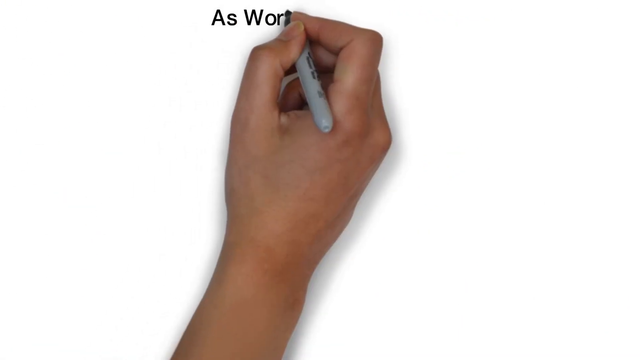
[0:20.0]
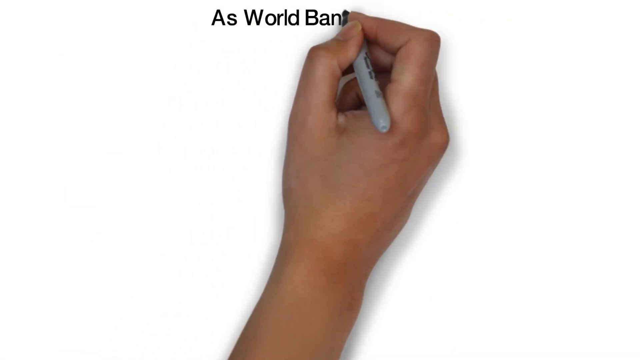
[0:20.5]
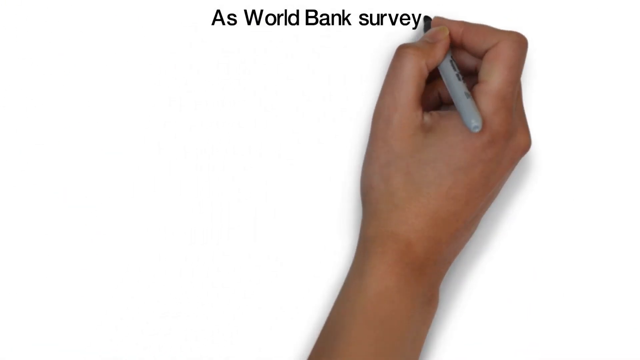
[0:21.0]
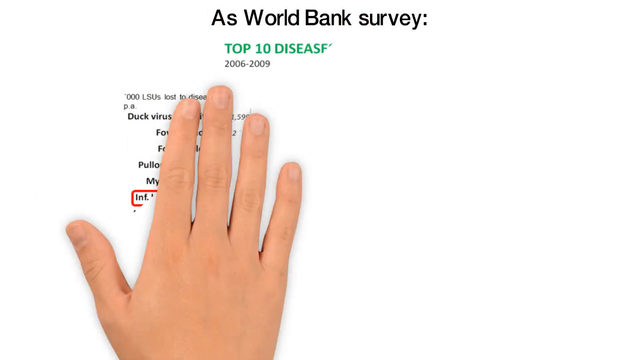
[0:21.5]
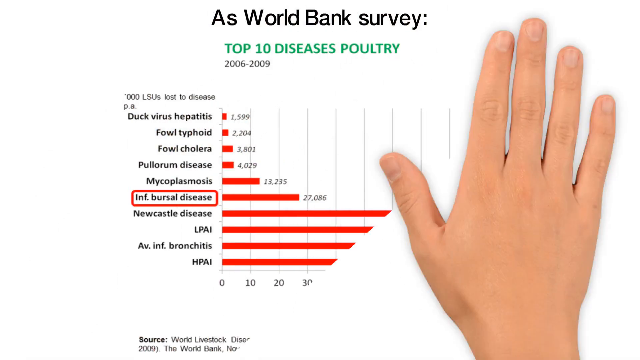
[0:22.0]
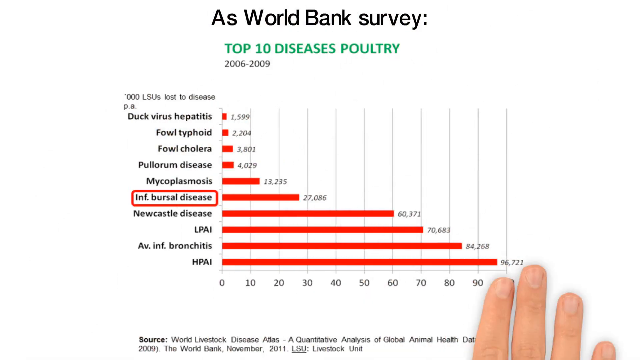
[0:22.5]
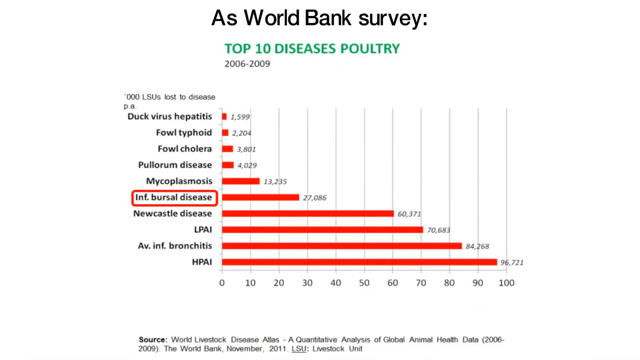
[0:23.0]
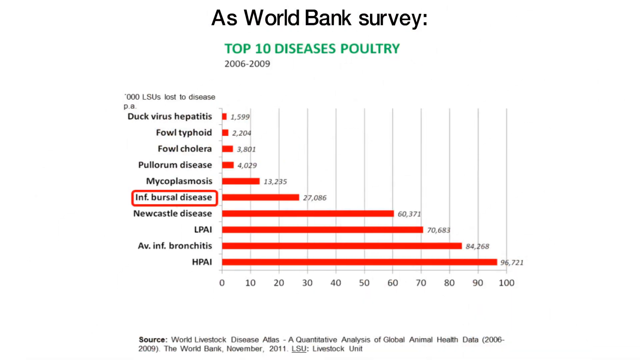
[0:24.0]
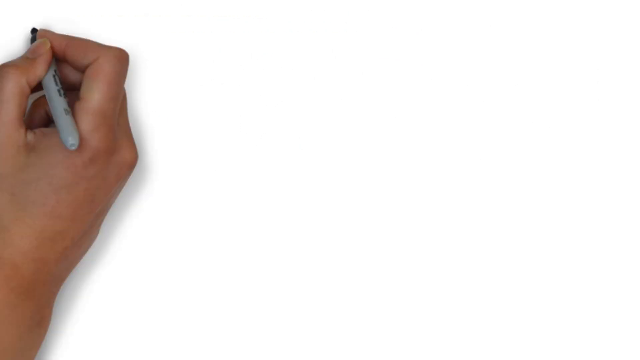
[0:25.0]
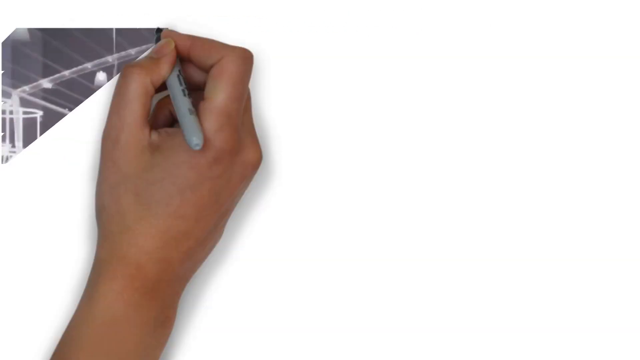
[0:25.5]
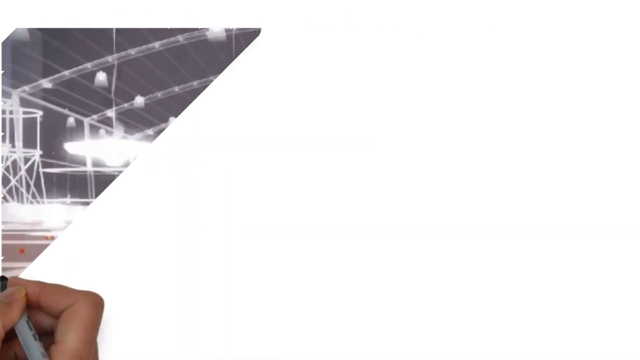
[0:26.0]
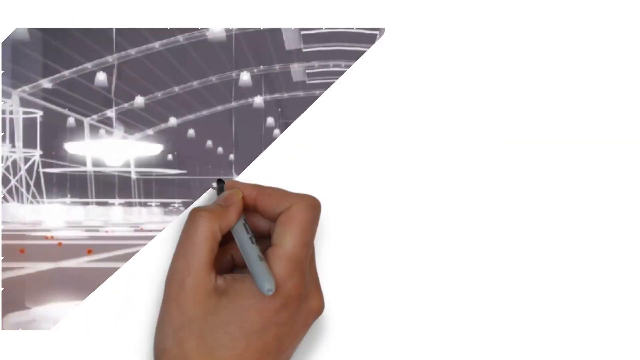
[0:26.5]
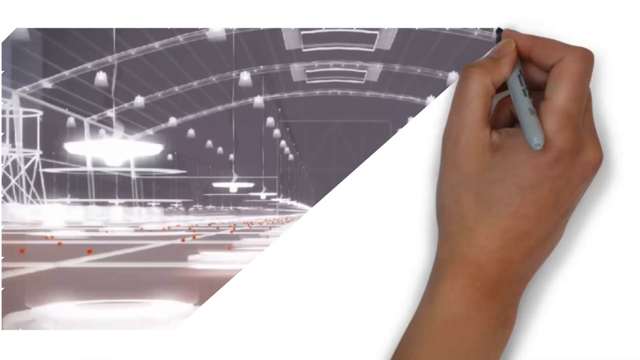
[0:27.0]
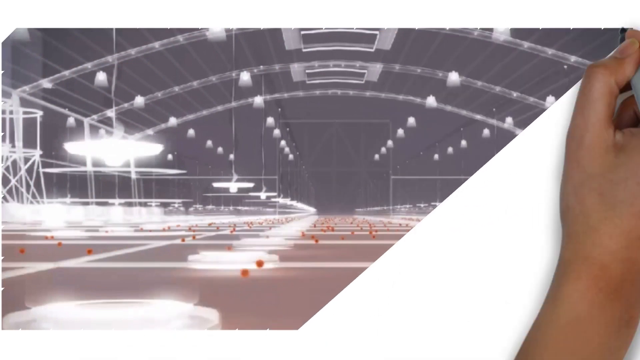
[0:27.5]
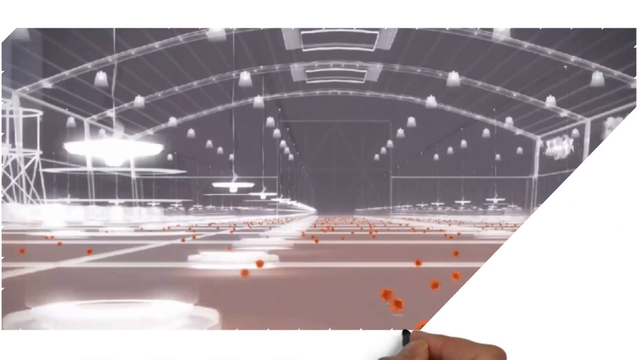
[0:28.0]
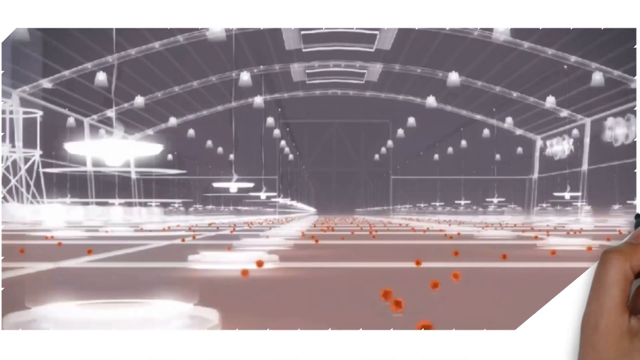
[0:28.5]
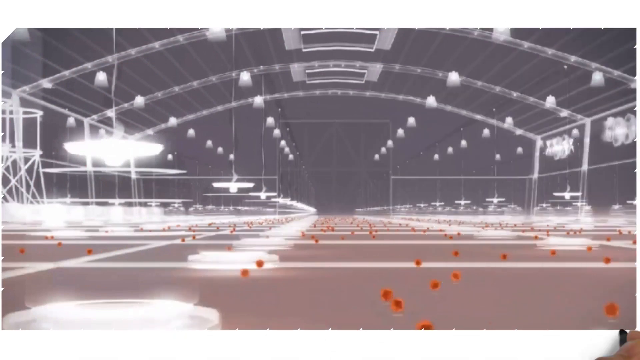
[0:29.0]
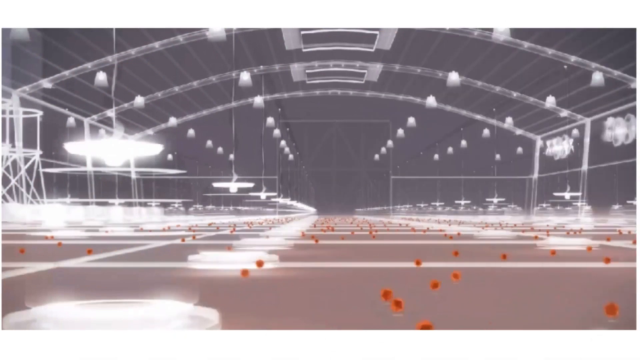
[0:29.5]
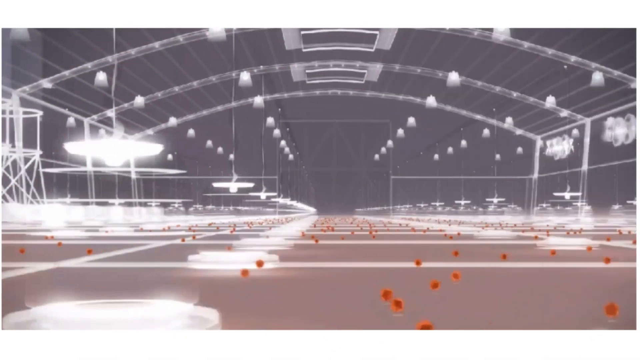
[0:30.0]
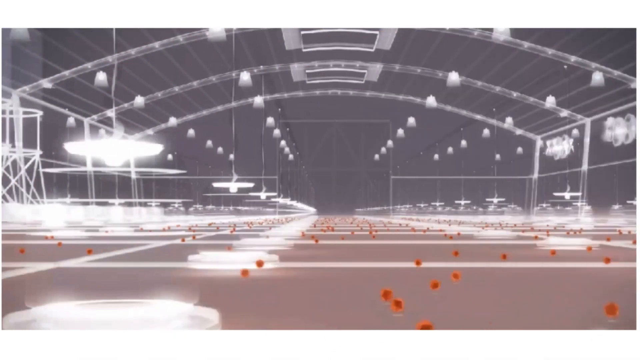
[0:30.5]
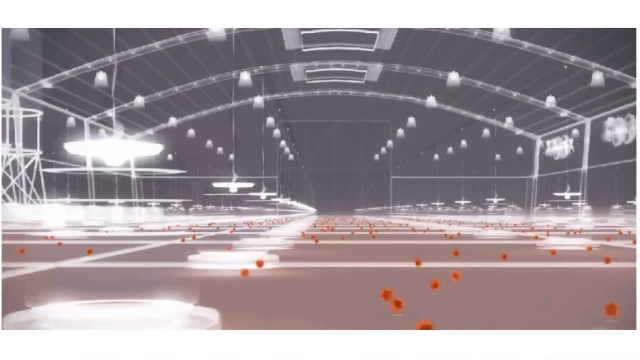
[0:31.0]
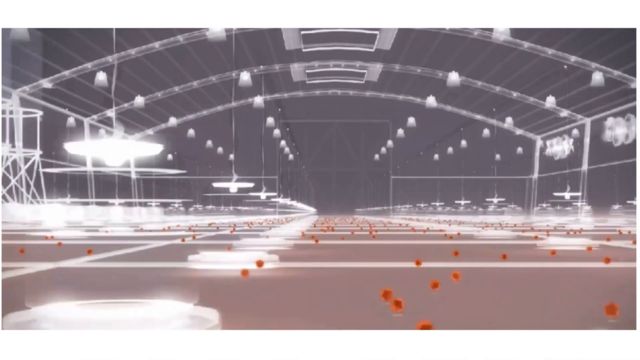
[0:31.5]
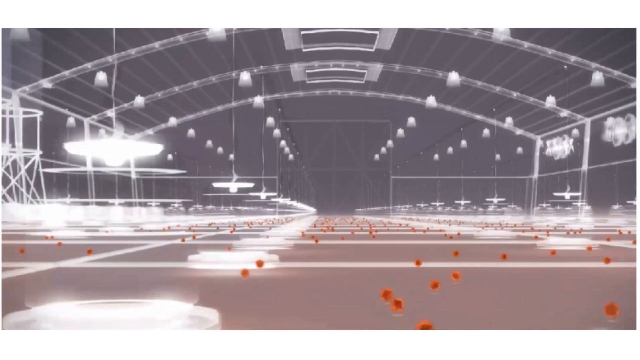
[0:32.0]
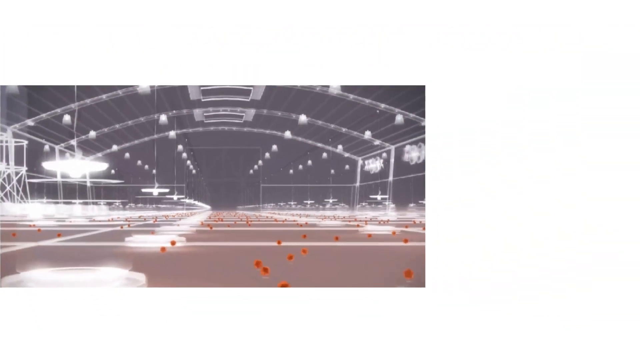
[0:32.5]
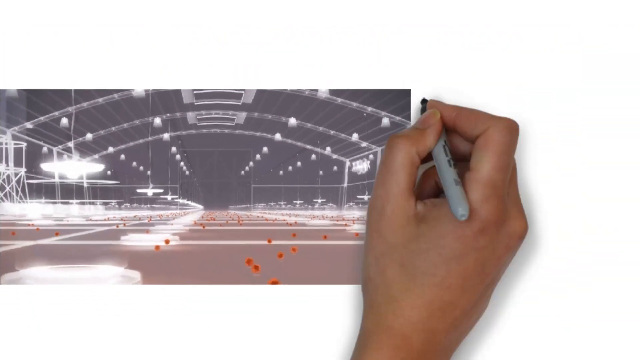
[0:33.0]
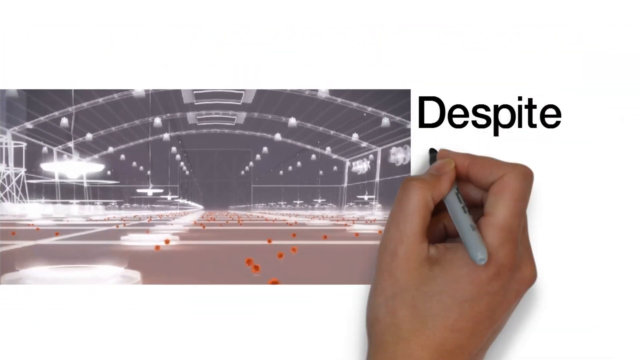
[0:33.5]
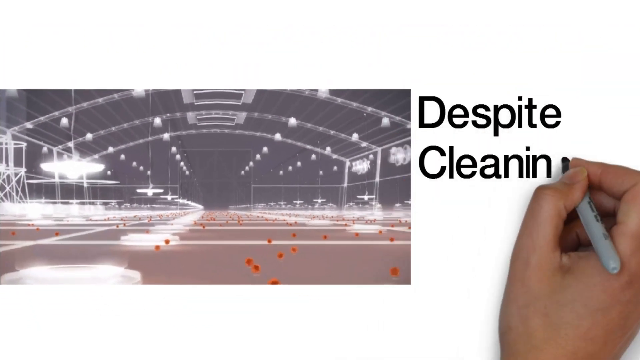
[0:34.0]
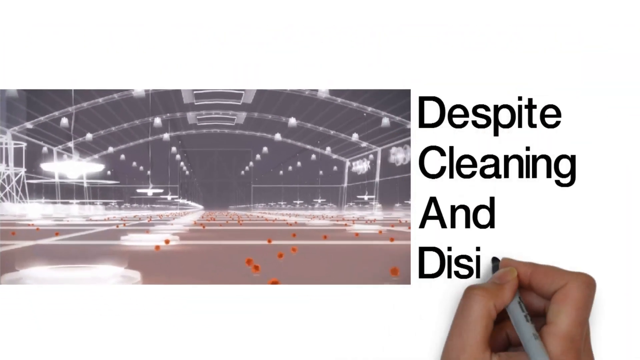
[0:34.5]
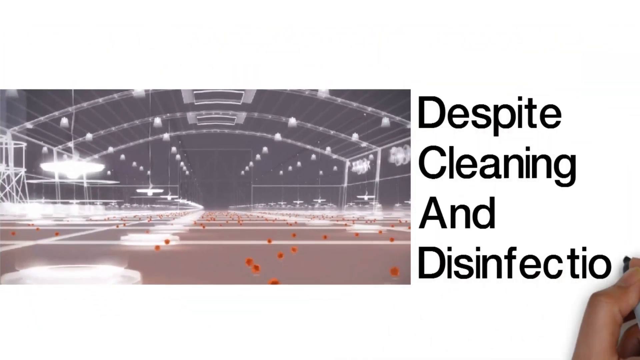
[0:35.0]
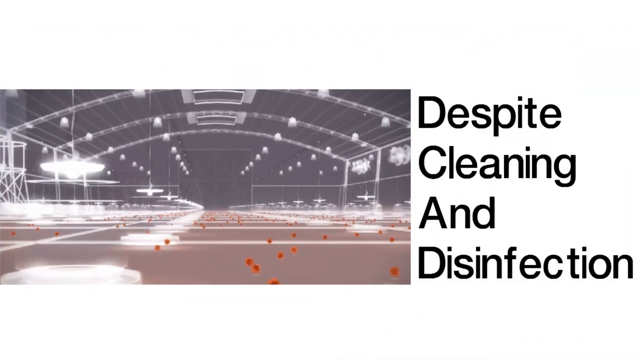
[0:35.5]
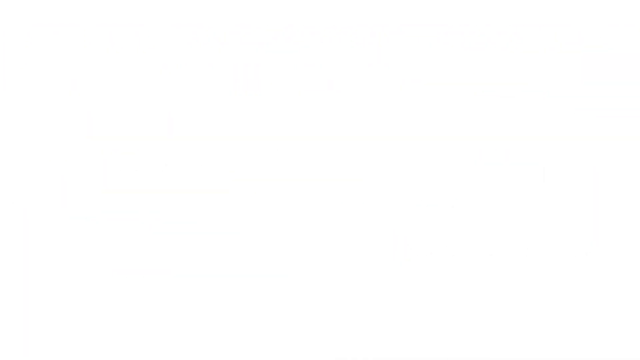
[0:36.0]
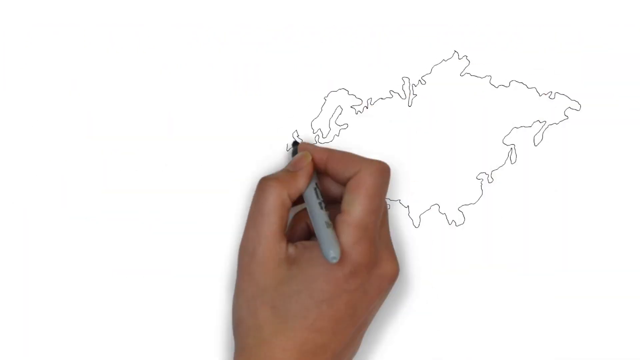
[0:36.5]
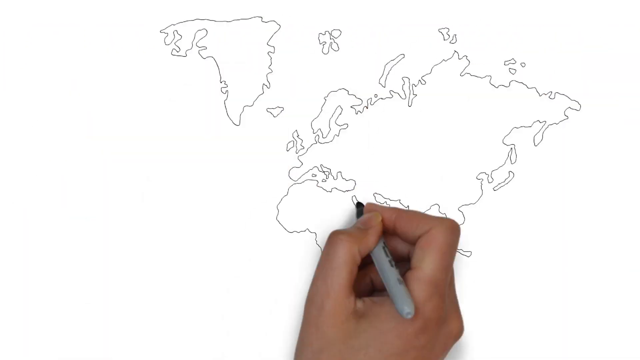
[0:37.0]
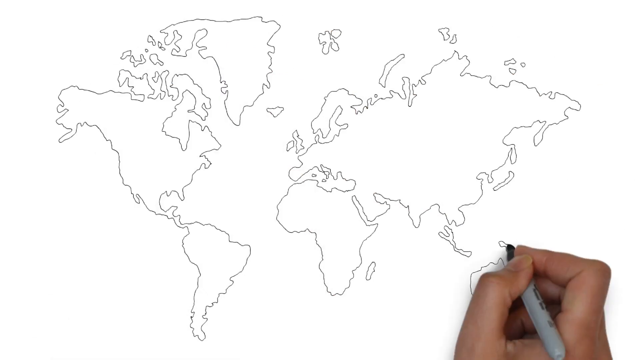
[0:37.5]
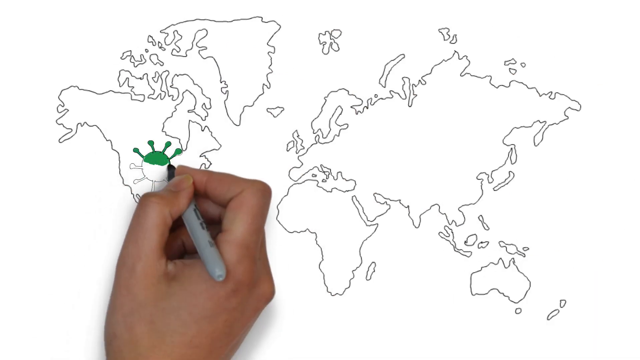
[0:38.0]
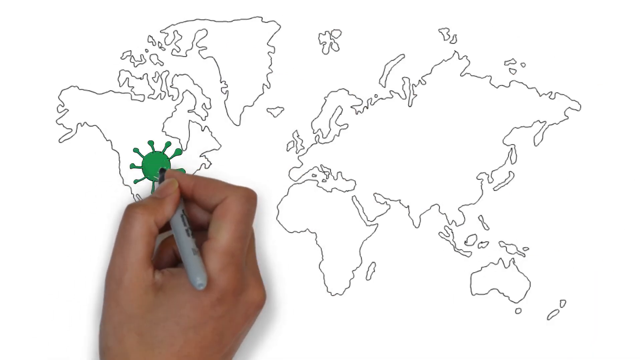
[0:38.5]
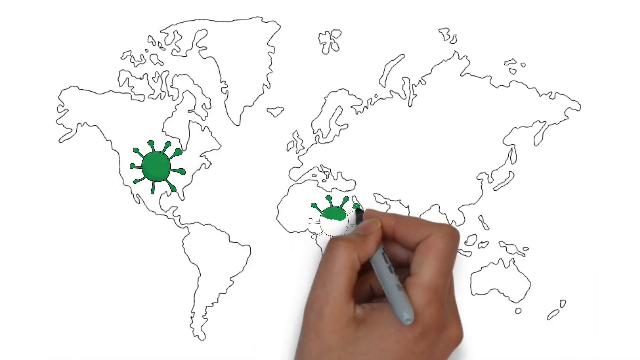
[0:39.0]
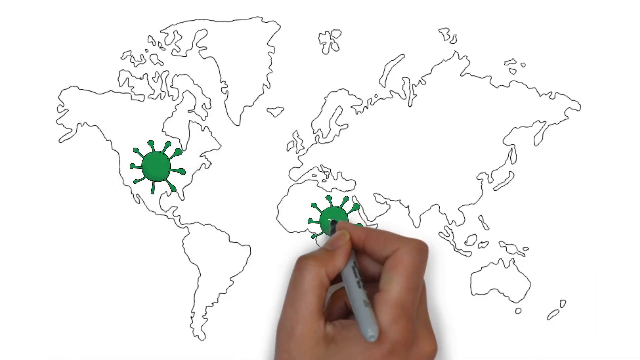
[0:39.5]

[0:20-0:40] The handwriting "as World Bank Survey" is written with a sharpie marker. A cartoon hand wipes the screen clear to reveal a chart titled "Top 10 Diseases Poultry" in green capital letters, with the years "2006 to 2009" underneath. On the left side the chart shows "LSU's loss to disease PA" with a list of diseases below it, and on the right is a horizontal bar graph running from the least loss to disease to the largest, its bars filled in with red. The diseases listed are "Duck Virus Hepatitis, Foul Typhoid, Foul Cholera, Pallorum Disease, Mycoplasmosis, Inferior Bursal Disease, Newcastle Disease, LPAI, Avian Inferior Bronchitis, HPAI". Inferior Bursal Disease is highlighted, with an LSU loss to disease of 27,086. At the bottom of the screen the source is given as "Livestock Atlas". Next, the hand colors in a drawing of what looks to be a factory, mainly gray with a brown floor, with many orange dots that look like bacteria or virus scattered around the floor. The image zooms out to reveal the handwriting "Despite Cleaning and Disinfection" on the right. The hand and sharpie then draw a flat atlas again, with a green cartoon virus in North America and on two other continents.